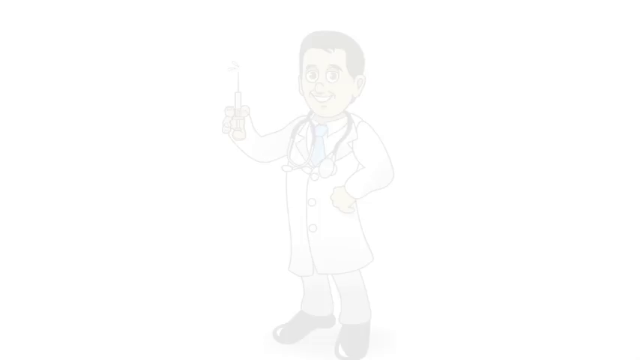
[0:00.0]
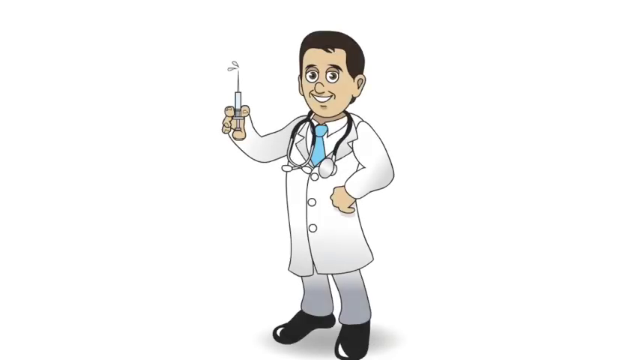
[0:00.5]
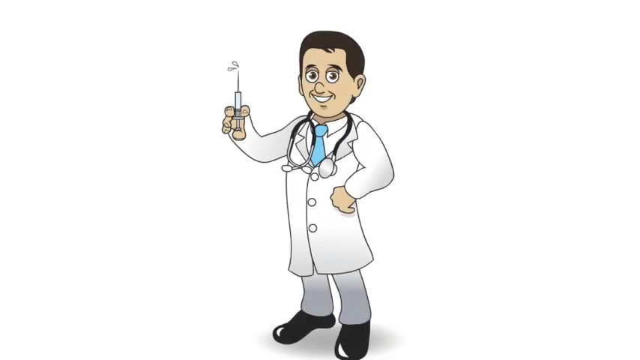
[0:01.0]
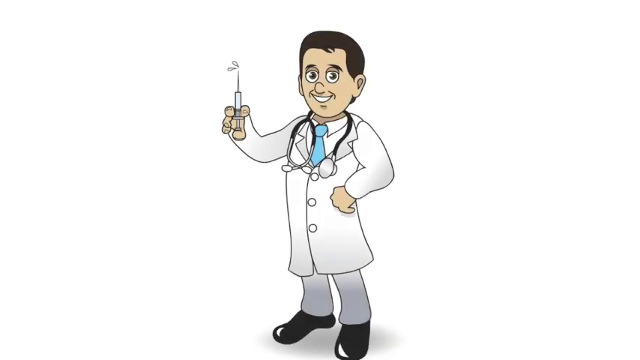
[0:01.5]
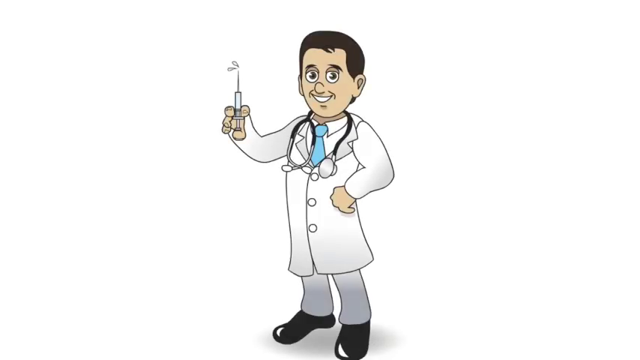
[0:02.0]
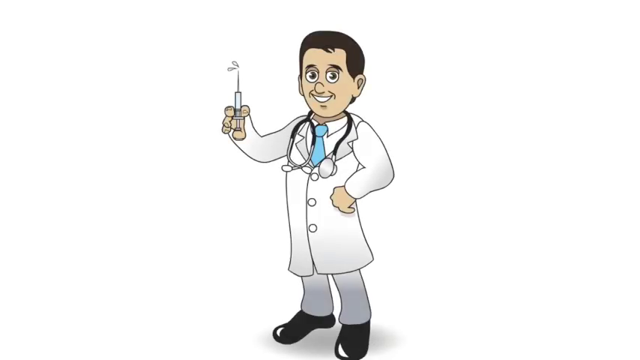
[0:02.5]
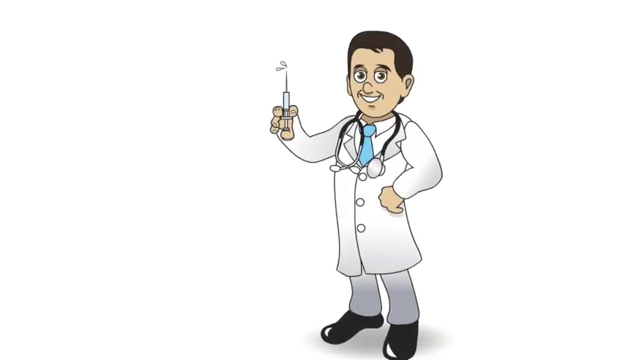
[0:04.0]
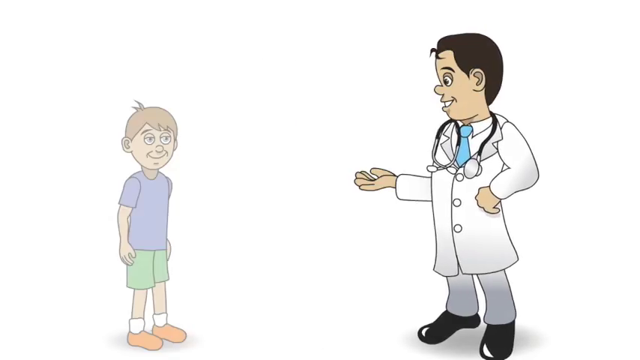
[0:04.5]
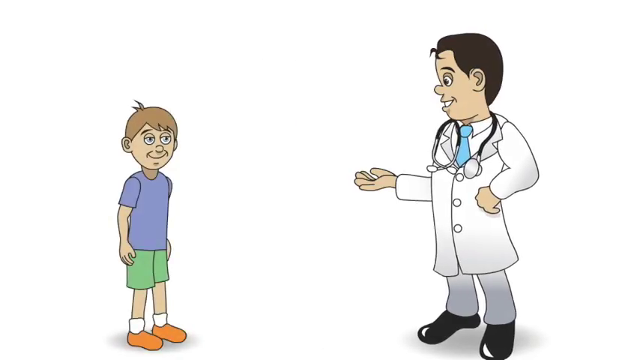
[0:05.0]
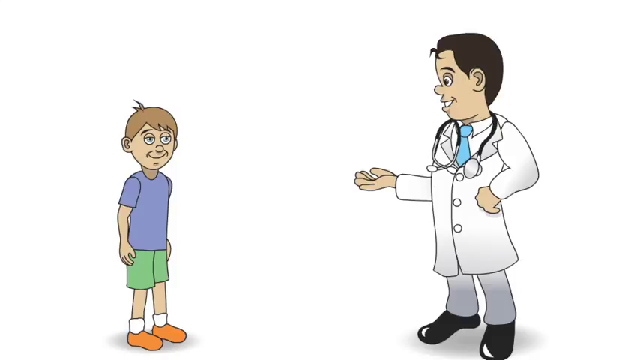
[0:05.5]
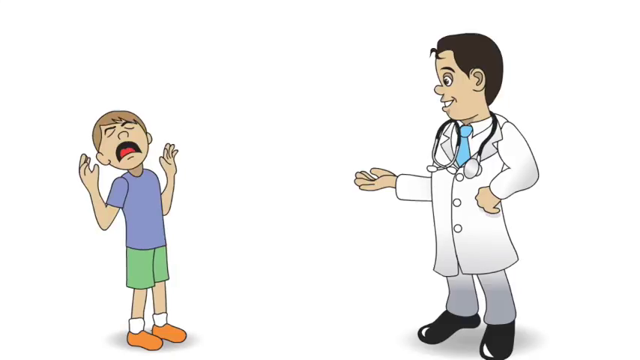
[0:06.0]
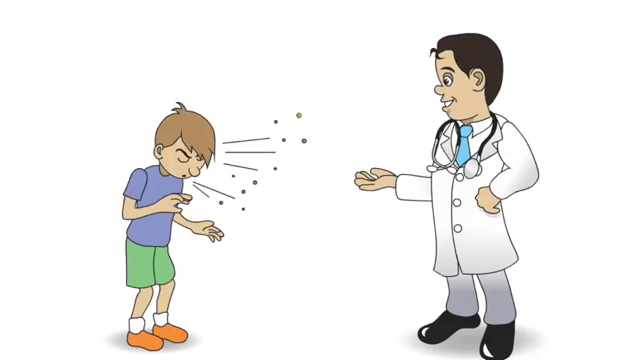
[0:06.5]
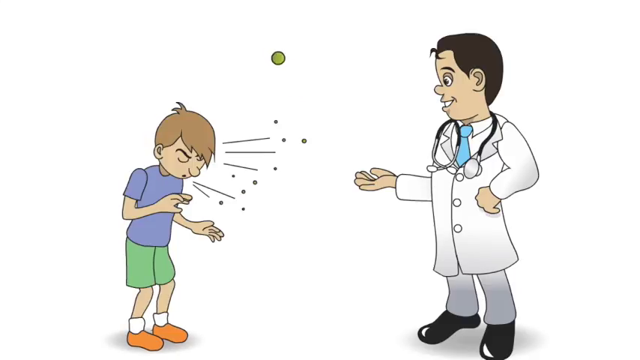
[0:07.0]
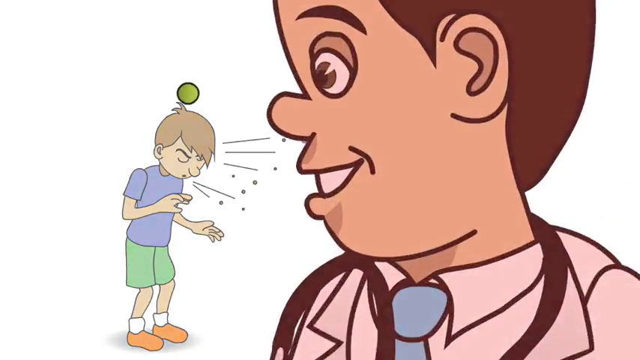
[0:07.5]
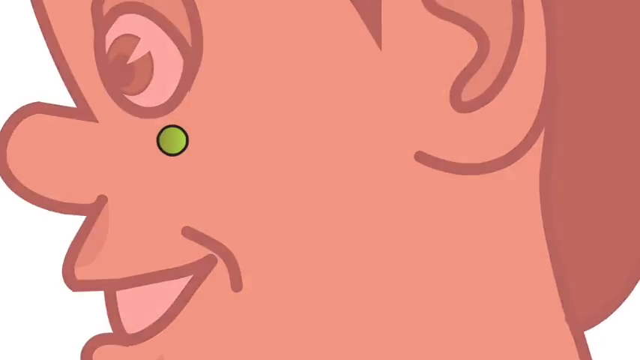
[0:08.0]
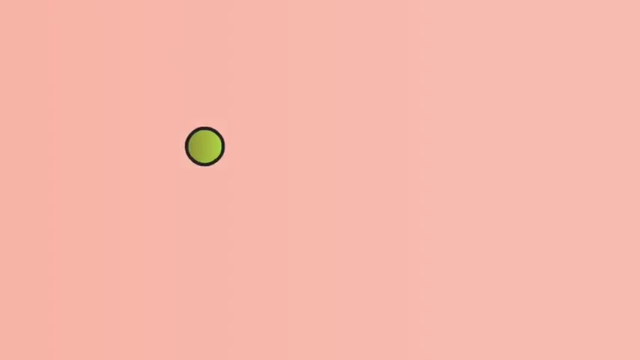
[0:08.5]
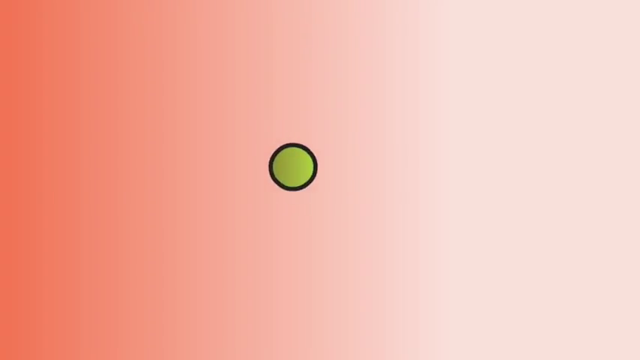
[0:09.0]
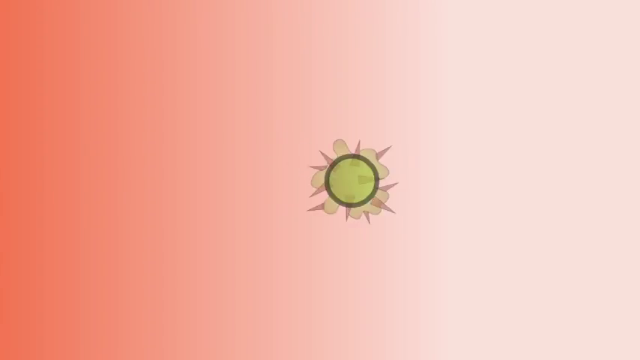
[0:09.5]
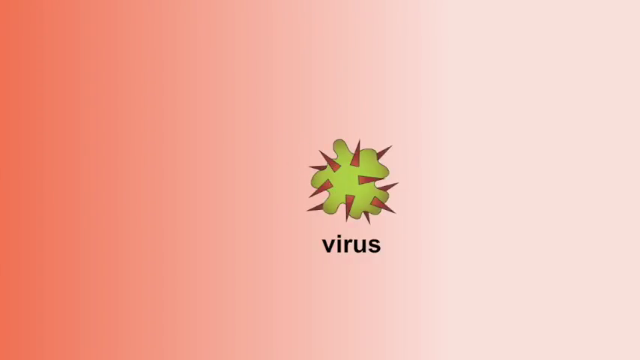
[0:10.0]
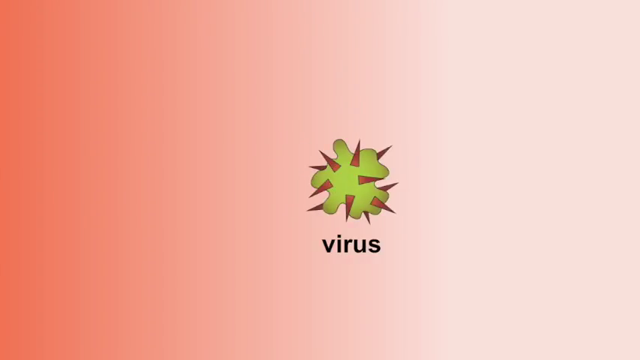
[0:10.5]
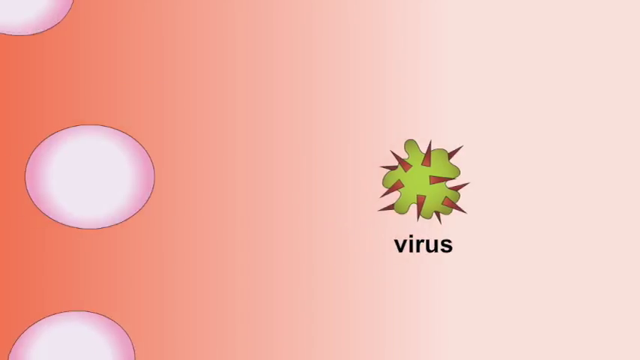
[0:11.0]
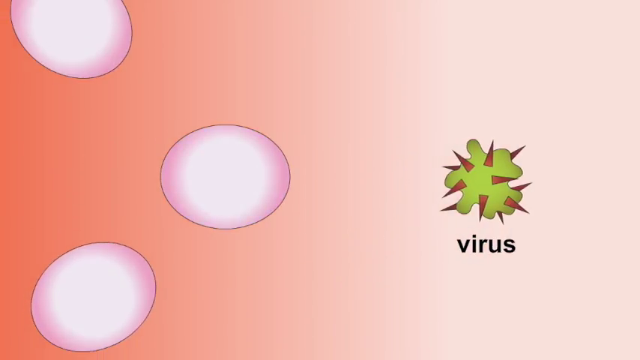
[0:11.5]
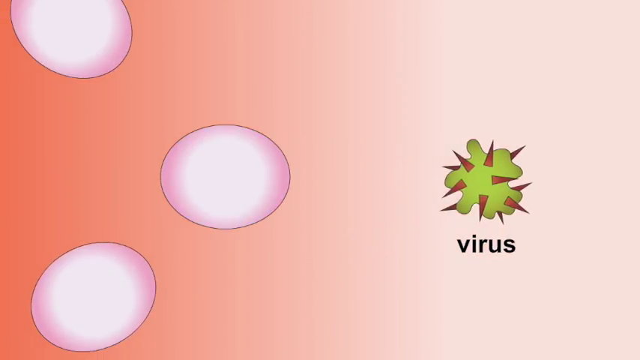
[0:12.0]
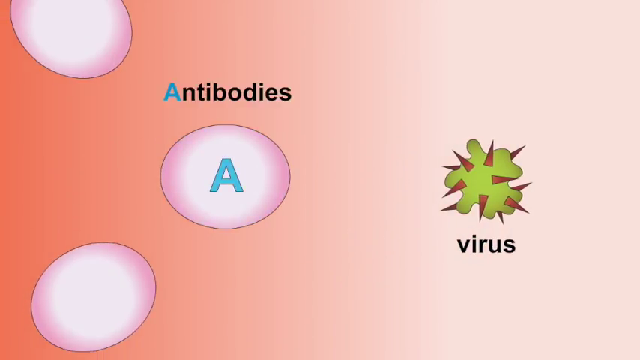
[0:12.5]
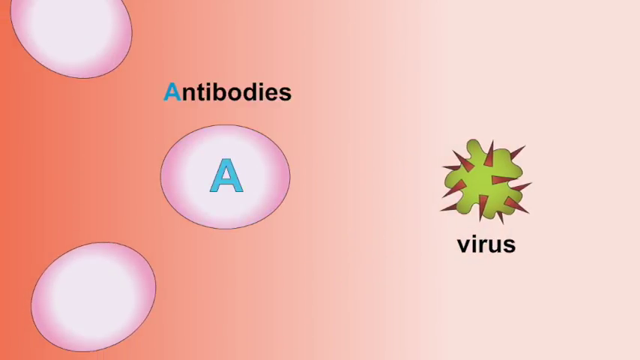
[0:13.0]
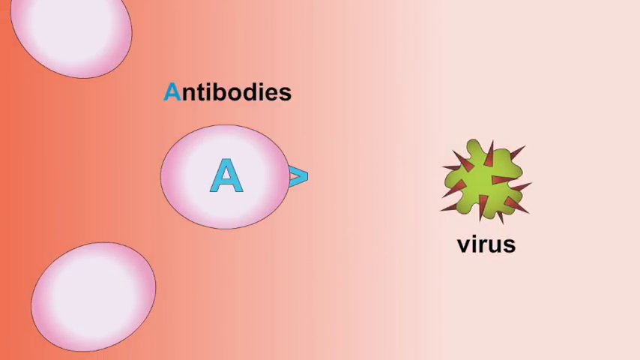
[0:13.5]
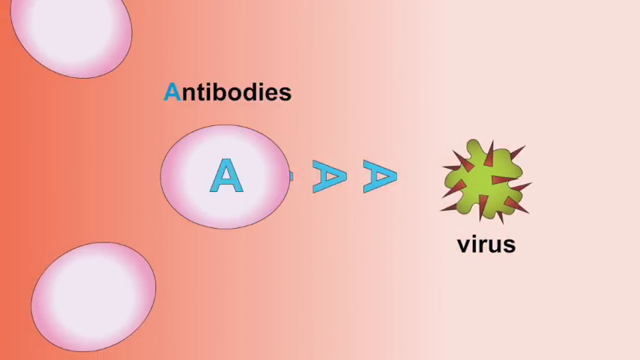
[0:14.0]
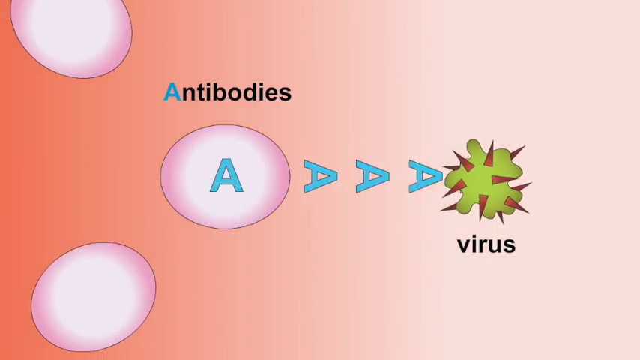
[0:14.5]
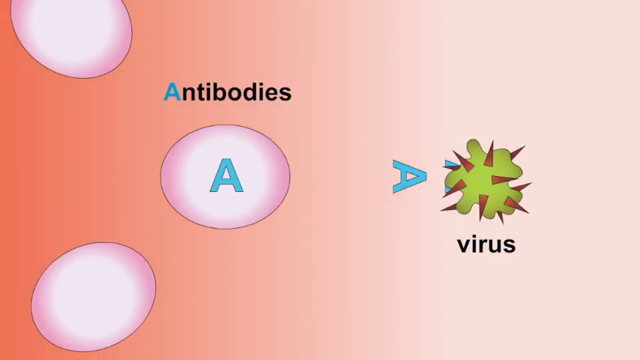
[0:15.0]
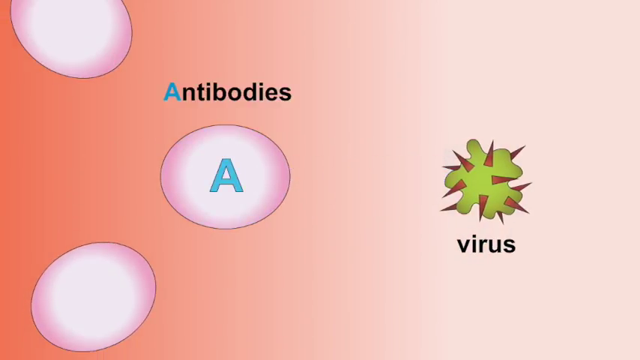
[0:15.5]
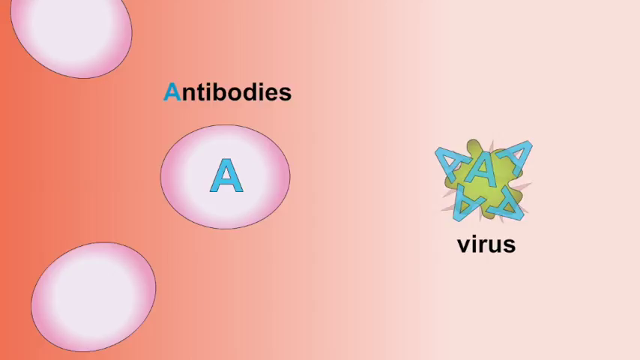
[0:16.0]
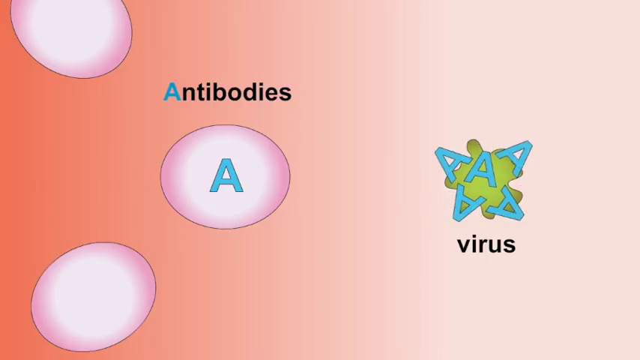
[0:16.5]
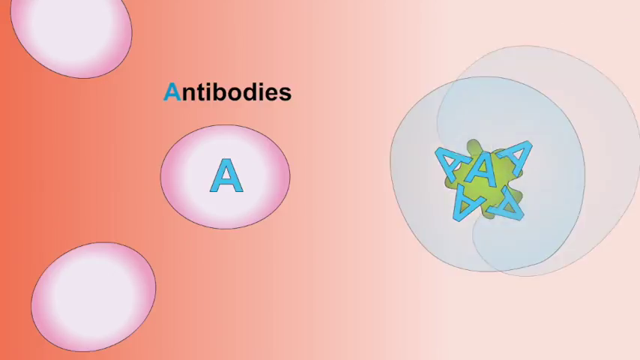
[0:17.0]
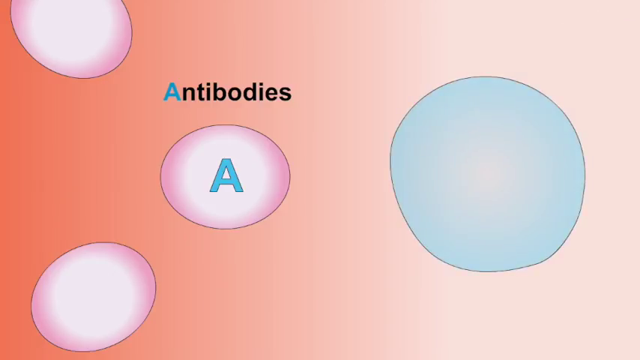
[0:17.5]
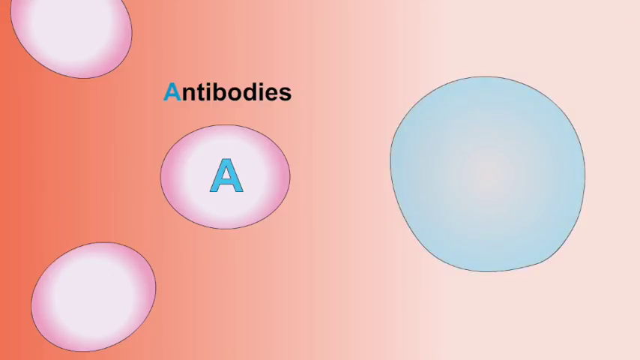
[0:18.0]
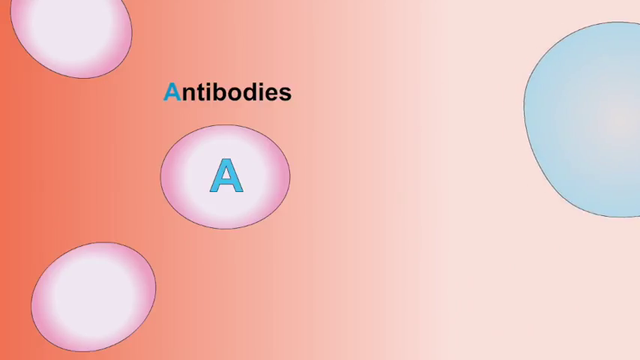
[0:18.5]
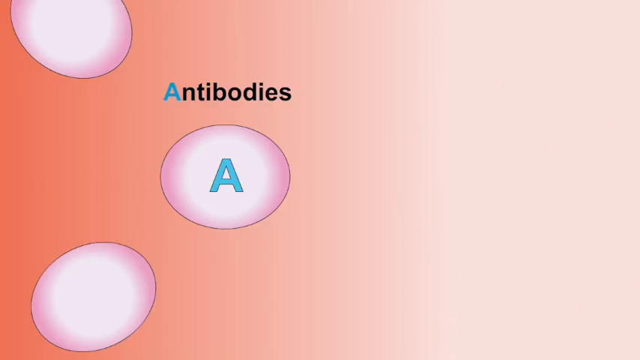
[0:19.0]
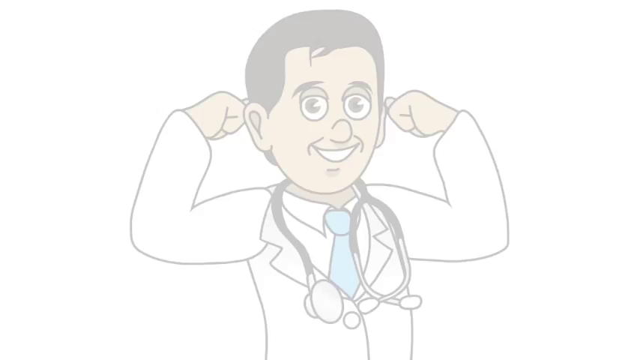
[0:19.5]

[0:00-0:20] The animation begins with a doctor holding a shot, the syringe in his right hand, with little droplets coming out of the top as if he is pressing it. A young boy appears on the screen and begins to sneeze. The camera closes in on the side of the doctor's head, and a small green dot appears. Spikes appear on the outside of the green blob, and the word "Virus" appears underneath. Three spheres then appear on the left side of the screen; they are white in the center and pink on the edges, and one of them has a large blue capital A inside. Above it the word "Antibodies" appears. Capital A's turned on their side shoot out from the antibody and hit the virus. The virus is then covered in capital A's and surrounded by a large blue sphere. It disappears, and the blue sphere floats off to the side. A close-up follows of the doctor holding his arms up in the air, giving a victory sign.